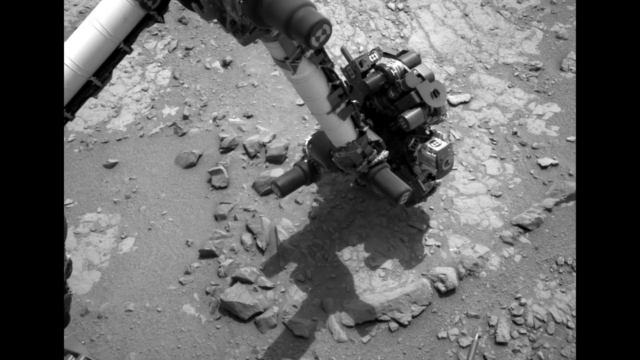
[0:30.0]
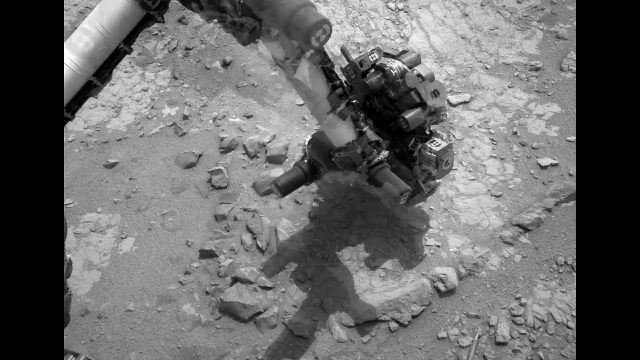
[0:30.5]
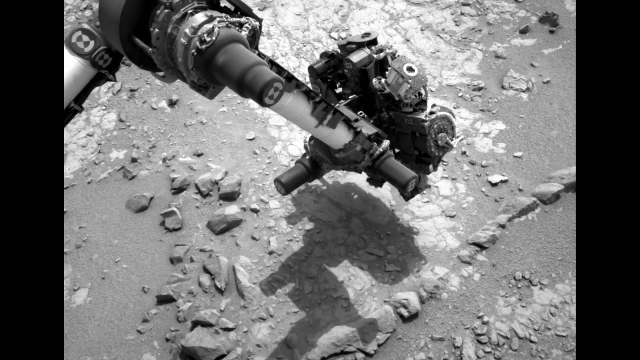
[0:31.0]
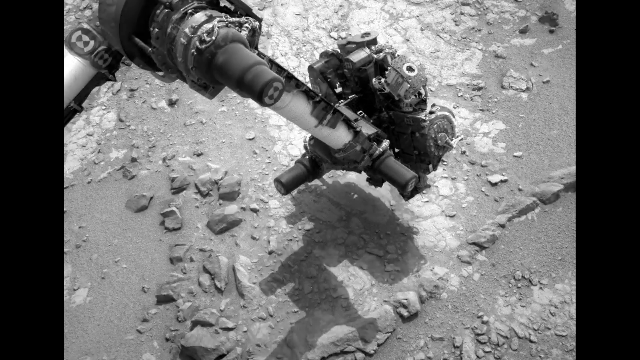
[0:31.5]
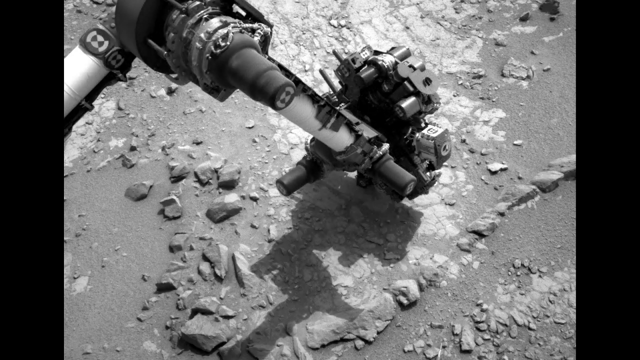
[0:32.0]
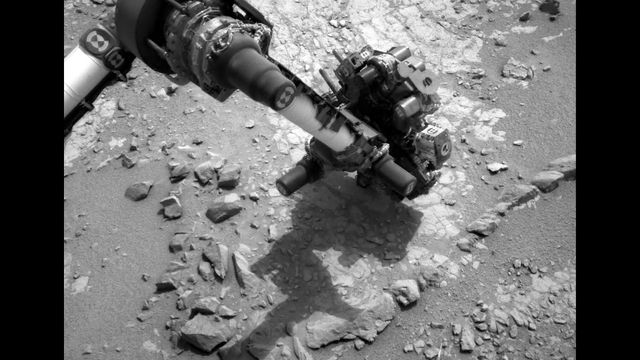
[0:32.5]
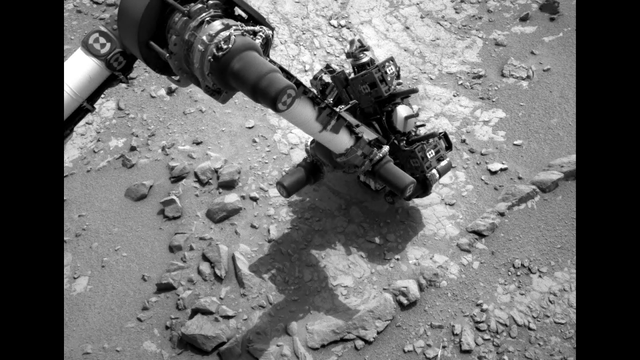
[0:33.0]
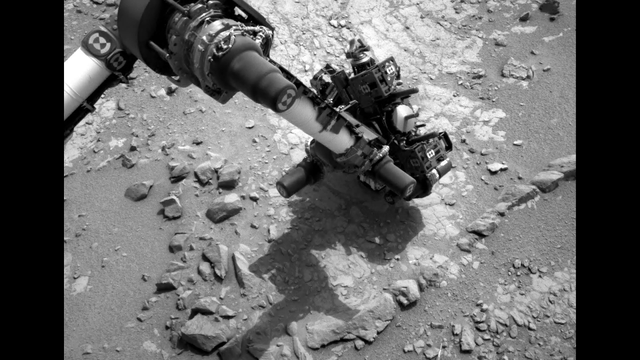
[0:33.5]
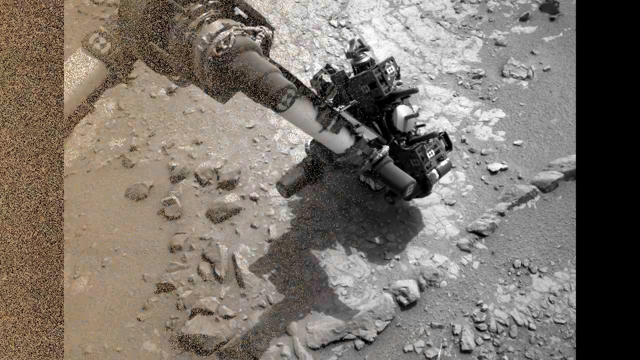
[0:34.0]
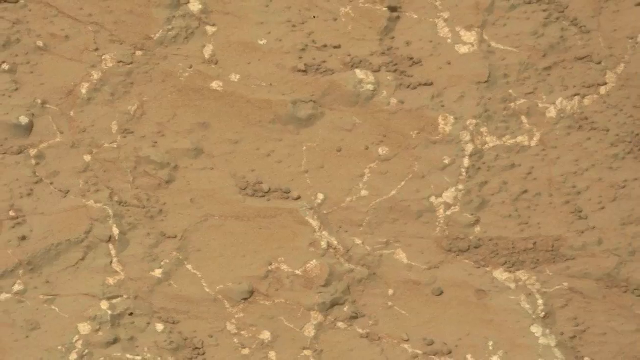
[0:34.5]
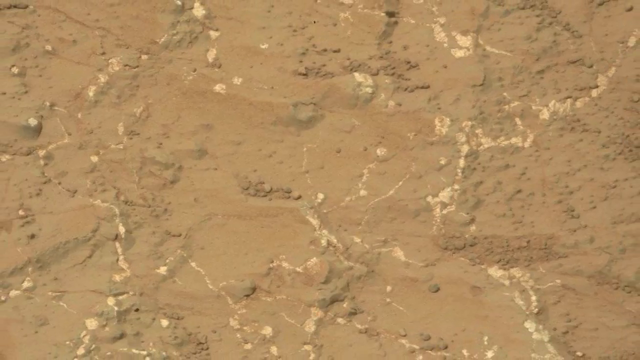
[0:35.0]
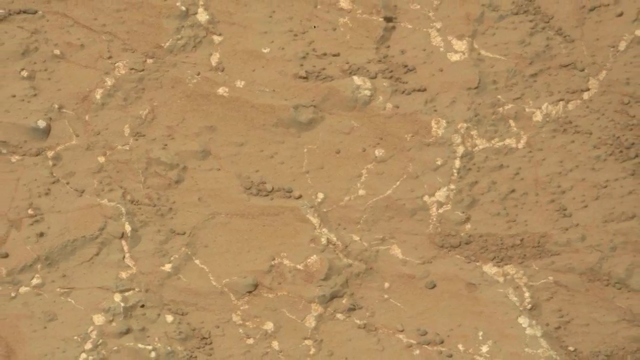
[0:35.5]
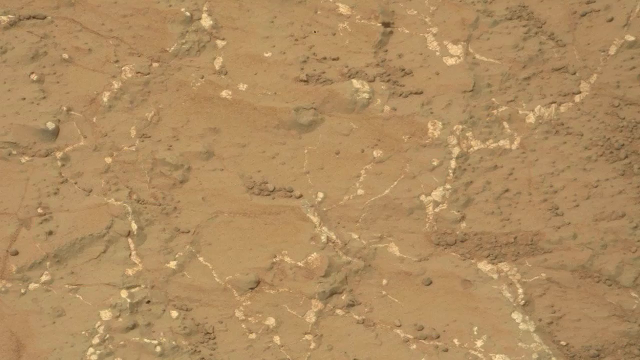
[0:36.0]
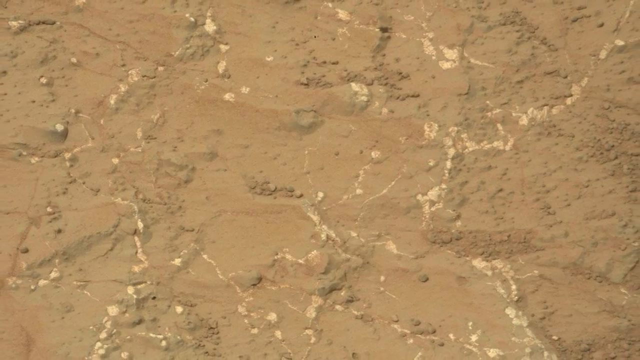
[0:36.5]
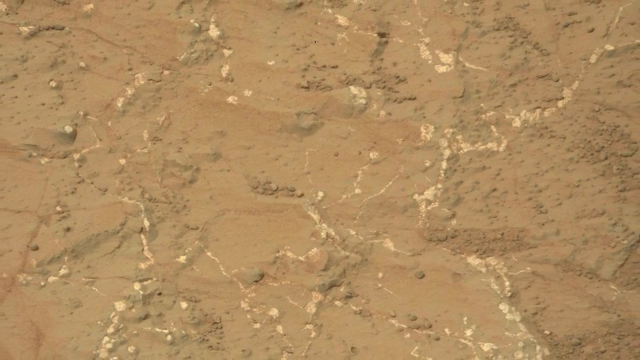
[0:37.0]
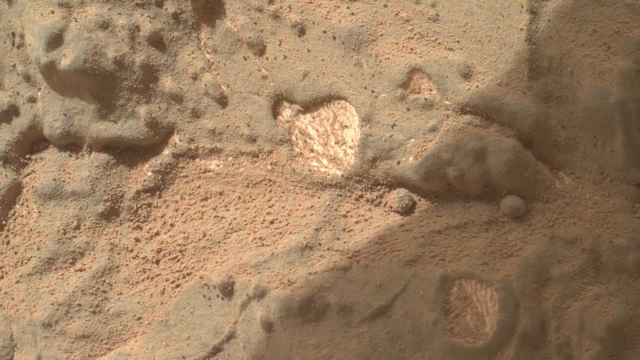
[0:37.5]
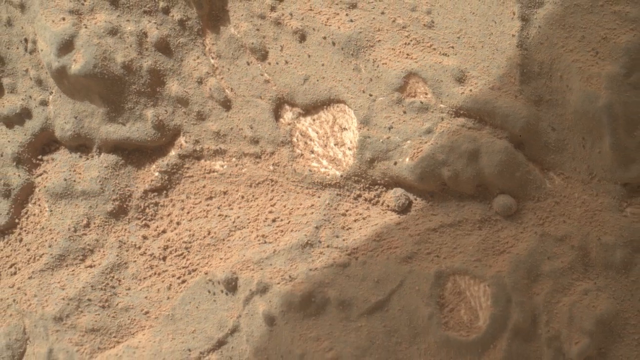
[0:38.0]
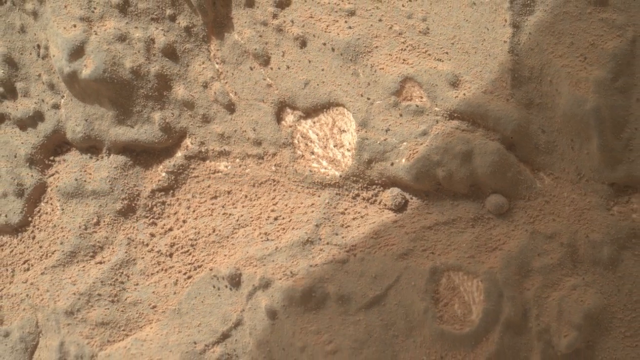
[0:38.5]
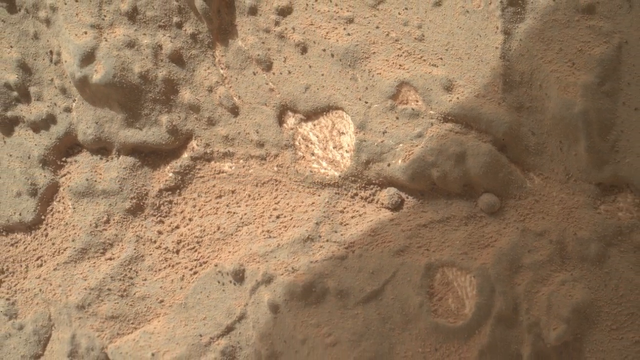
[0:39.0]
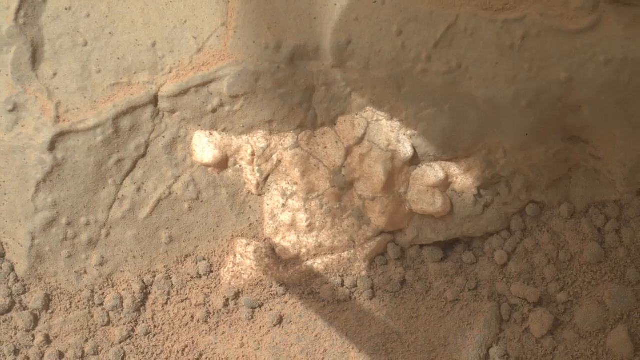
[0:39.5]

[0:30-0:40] What appears to be the surface of Mars is seen through the lens of the Mars rover: a somewhat rocky surface and the robotic arm of the rover. The colors are either black and white or tan, depending on the camera used. The arm has some sort of mechanical features on it that are hard to make out, possibly a camera or some sort of sensory apparatus or instrumentation.